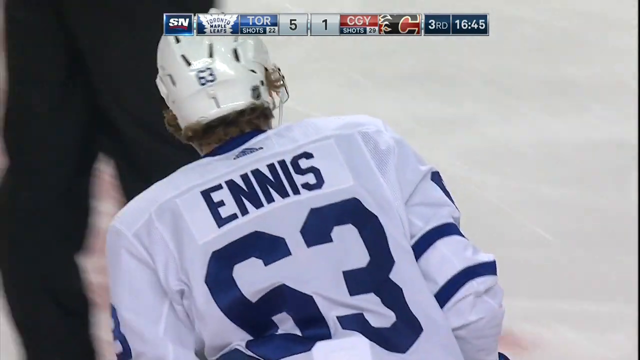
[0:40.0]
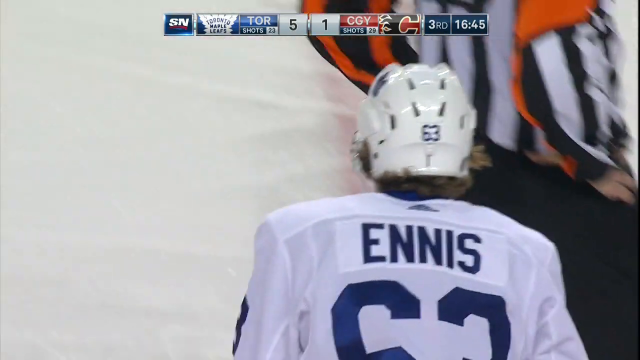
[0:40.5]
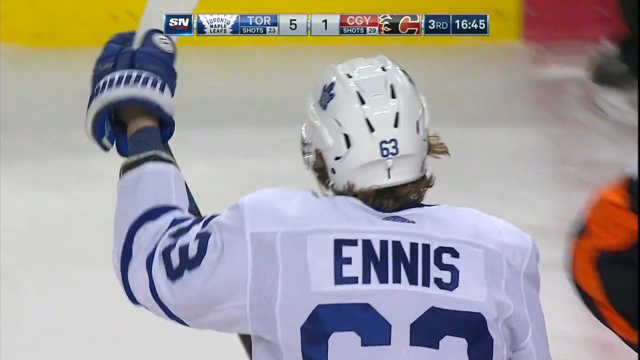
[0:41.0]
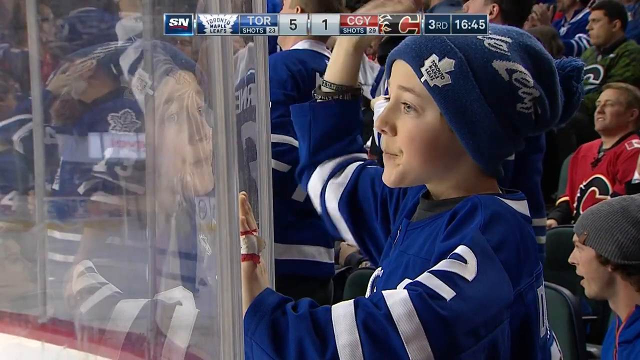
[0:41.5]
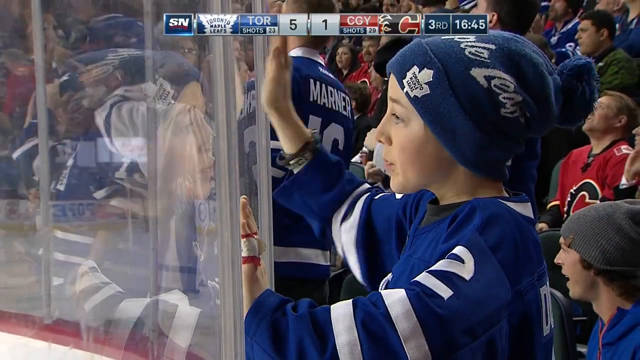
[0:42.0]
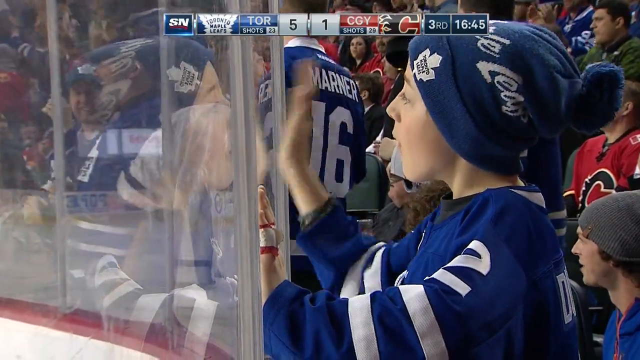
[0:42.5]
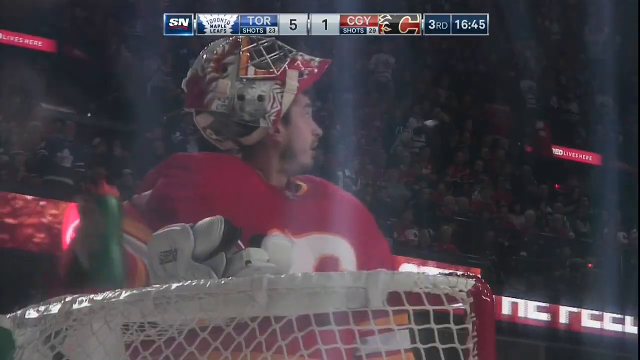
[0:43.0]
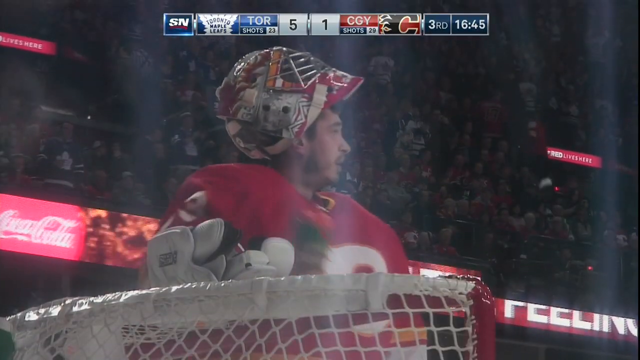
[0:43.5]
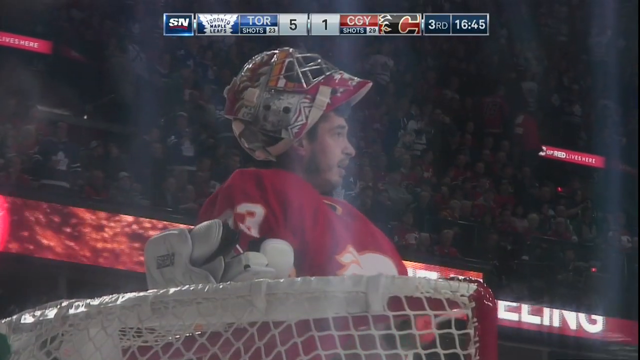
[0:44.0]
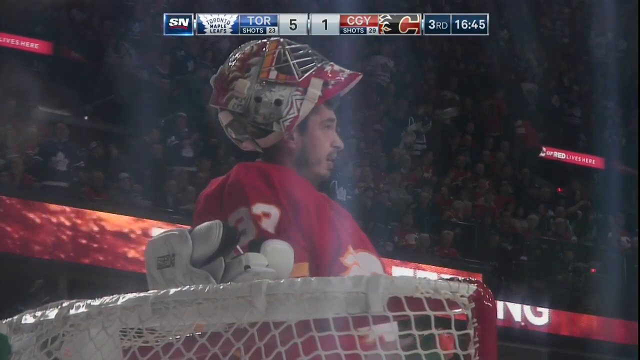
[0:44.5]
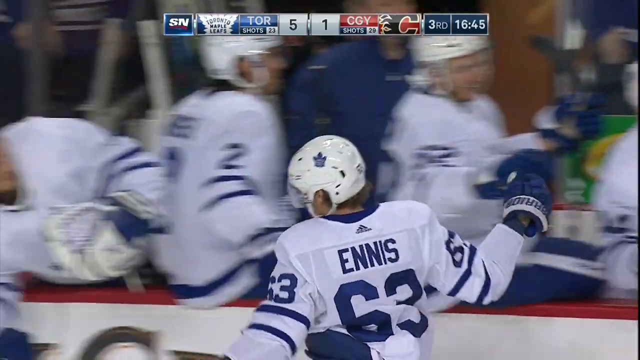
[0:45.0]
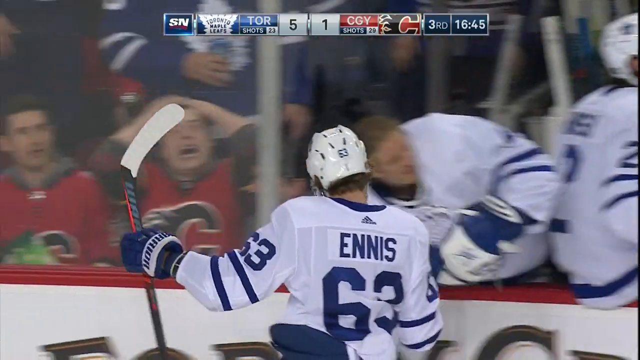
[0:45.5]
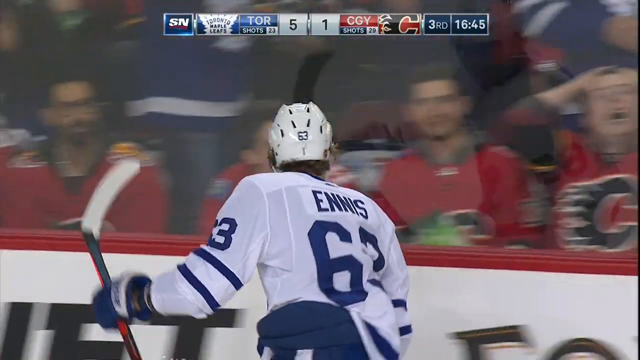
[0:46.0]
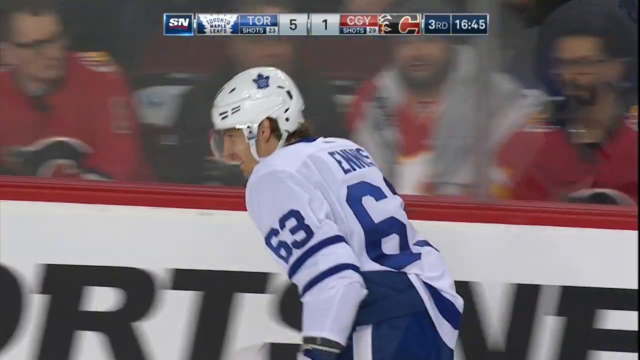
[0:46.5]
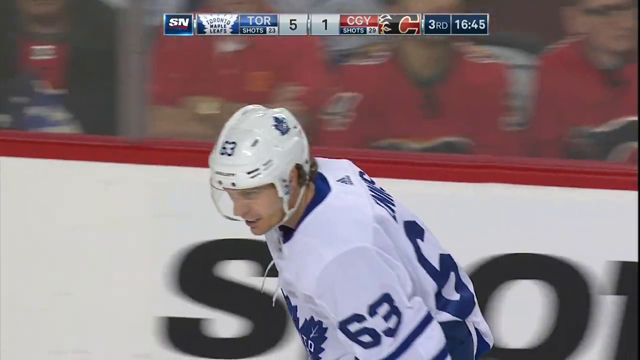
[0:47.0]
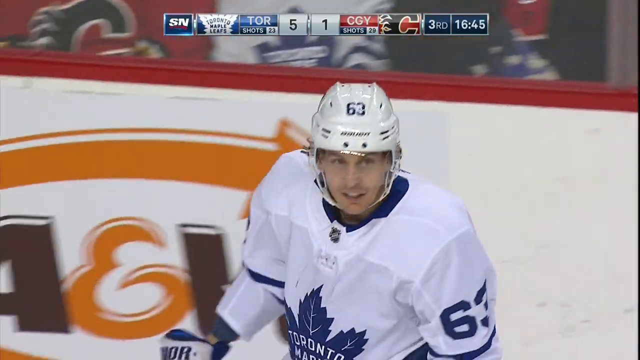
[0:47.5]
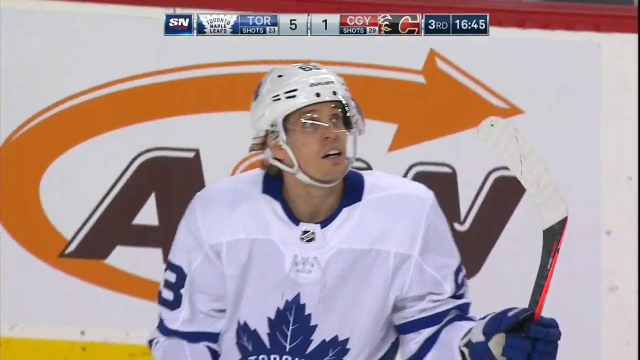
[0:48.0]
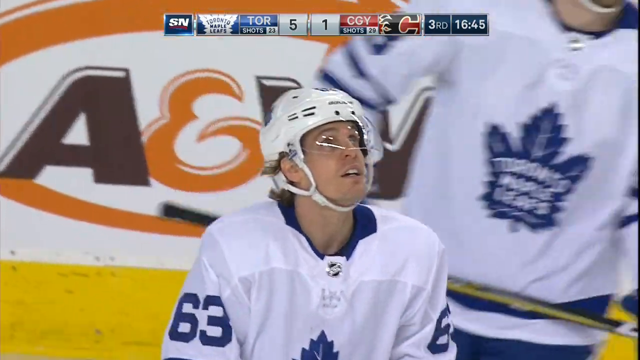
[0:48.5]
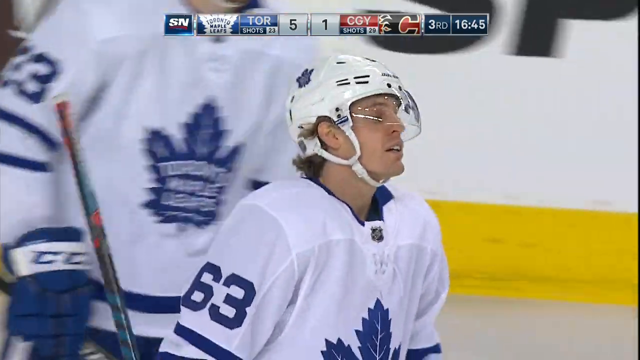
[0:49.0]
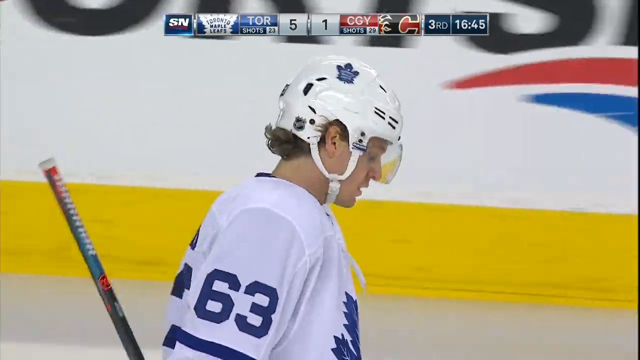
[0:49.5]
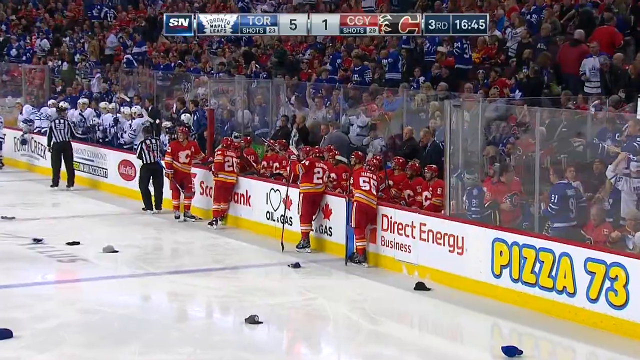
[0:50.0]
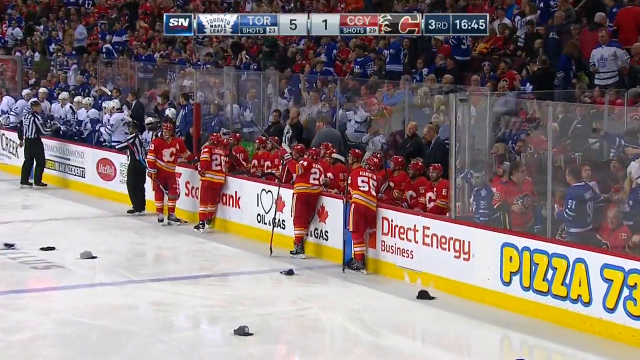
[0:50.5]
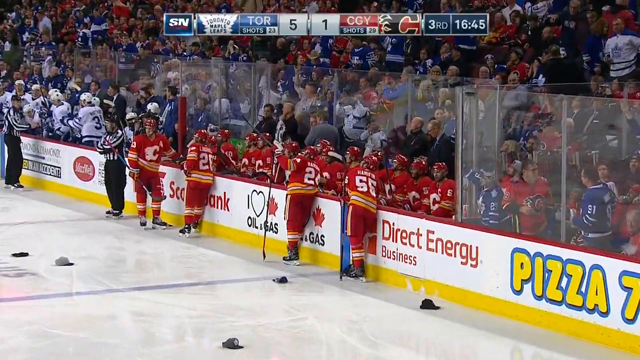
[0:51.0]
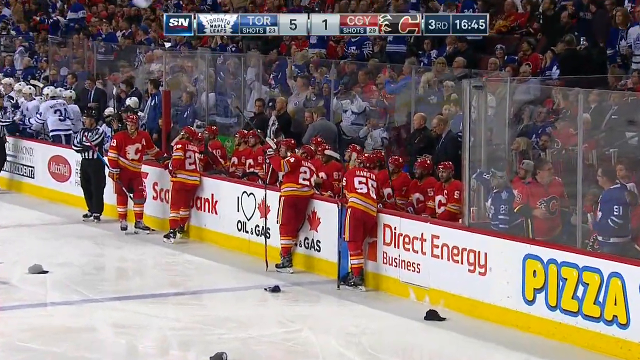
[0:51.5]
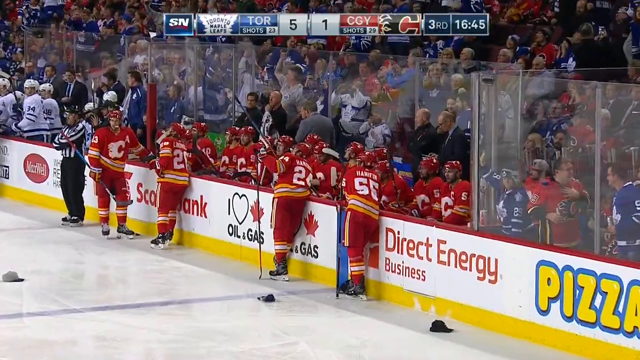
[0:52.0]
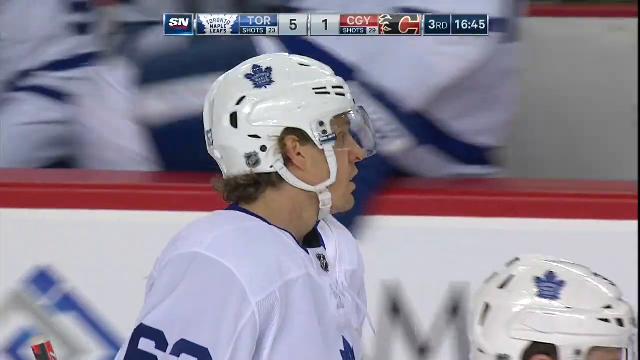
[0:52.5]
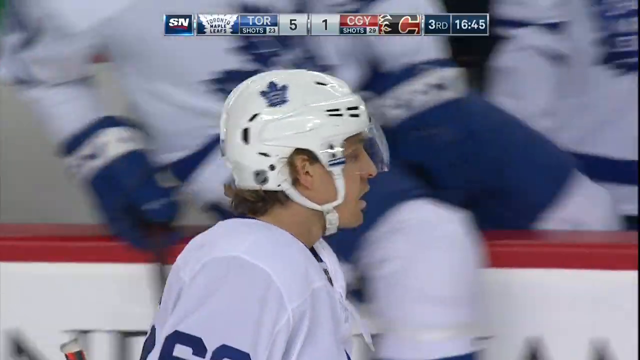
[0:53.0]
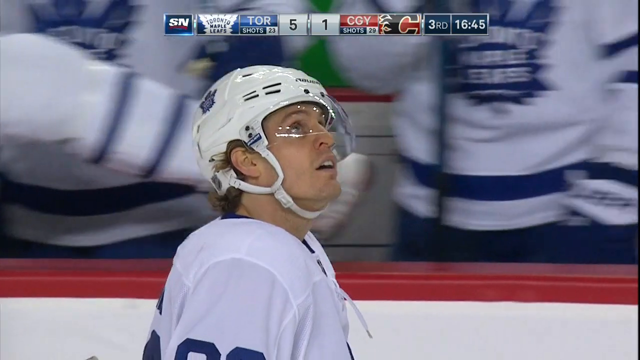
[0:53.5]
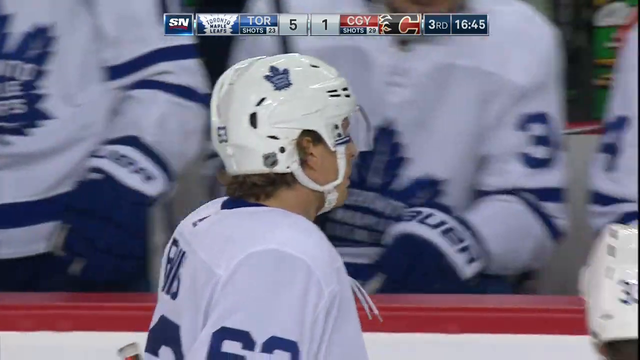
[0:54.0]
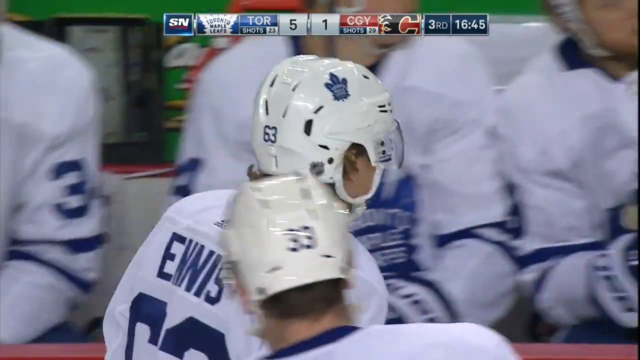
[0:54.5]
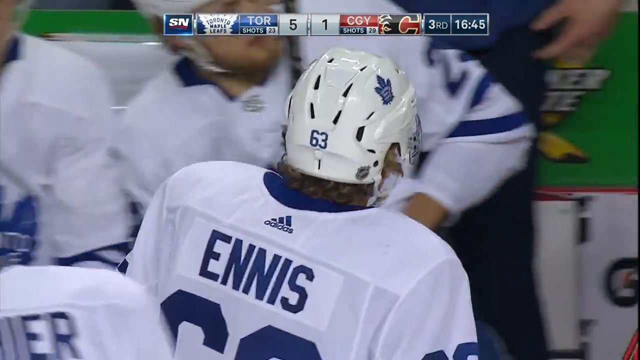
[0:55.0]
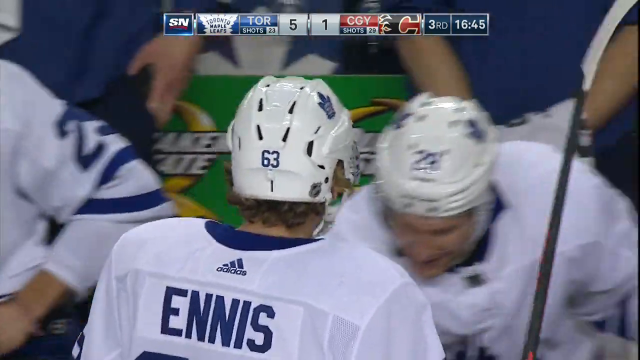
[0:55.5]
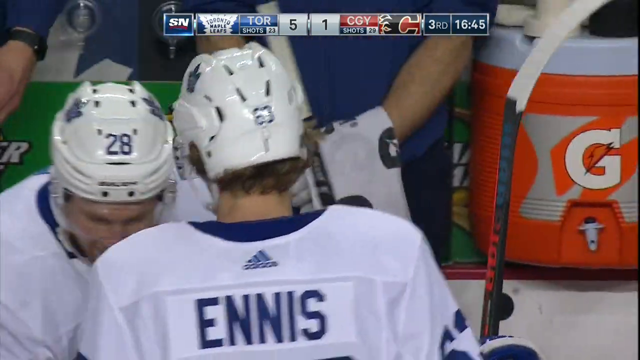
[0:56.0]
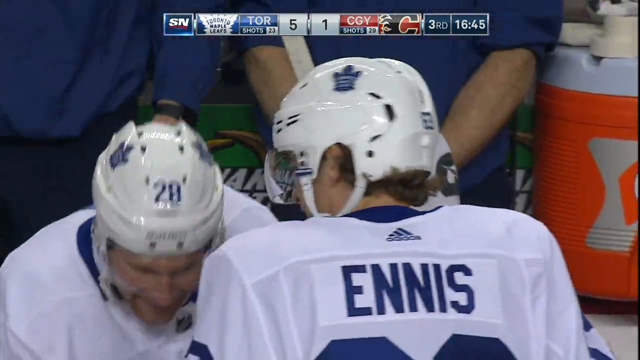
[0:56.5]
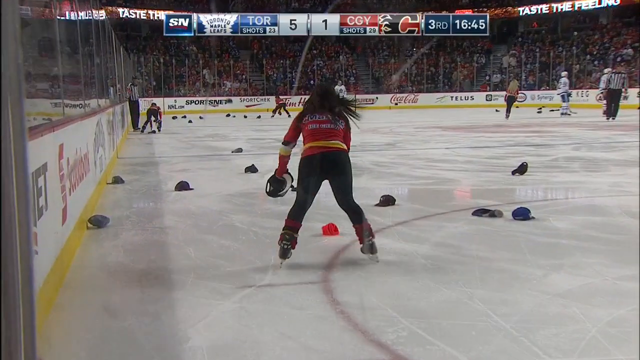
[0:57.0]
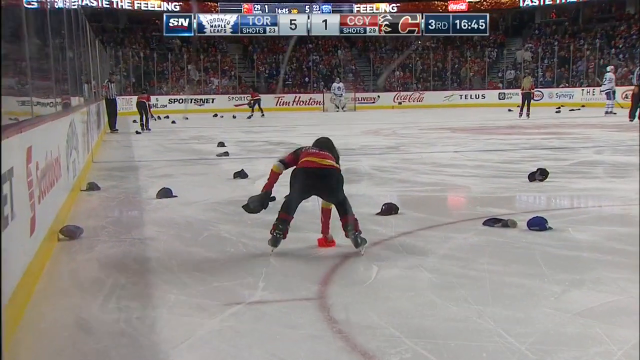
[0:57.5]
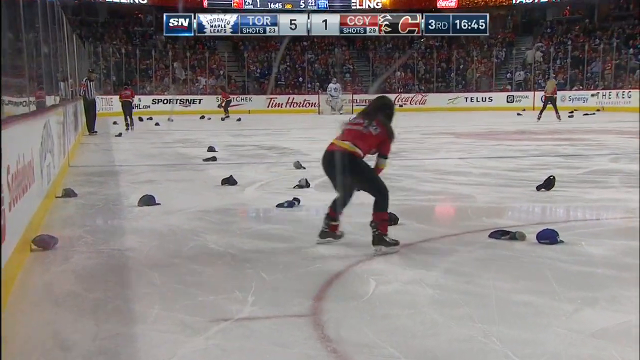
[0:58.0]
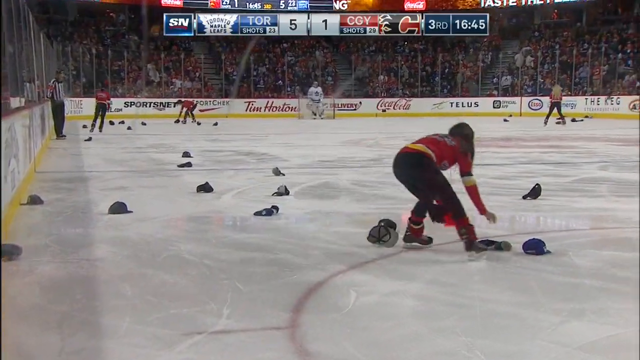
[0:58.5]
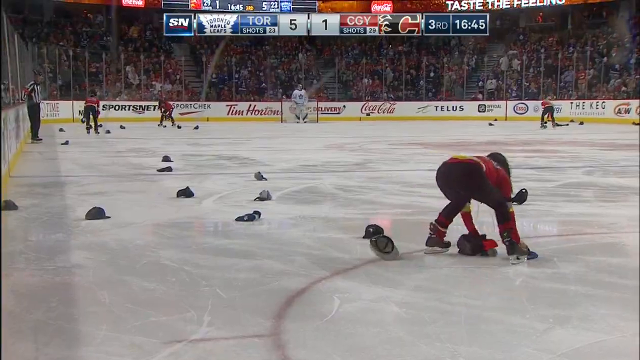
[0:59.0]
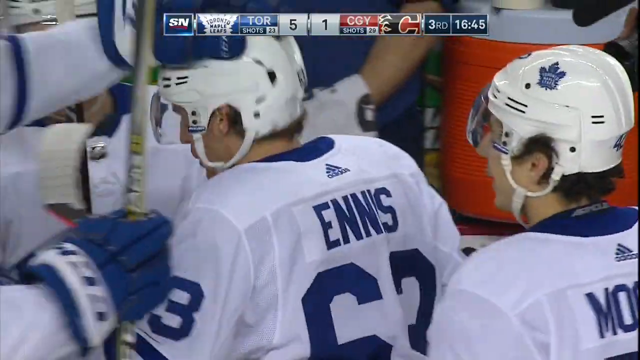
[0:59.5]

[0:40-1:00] Toronto Maple Leafs player Tyler Ennis, number 63, is on the field, facing away so that his back is visible. He wears a white hockey helmet and a white jersey with blue detailing. The scene changes to a close-up of a little boy standing in the stands, wearing a Maple Leafs cap and a Maple Leafs jersey. He excitedly watches the game with his left hand raised, palm facing the team and arm bent at the elbow, hitting with his palm on the glass that protects the fans from flying pucks. The scene changes again to a Calgary Flames player standing on the side of the field with his helmet up above his head, his face visible, watching the game in a red and white jersey; he looks like he cannot wait to get in the game. The upper portion of the screen shows it is the third quarter with 16 minutes and 45 seconds left.